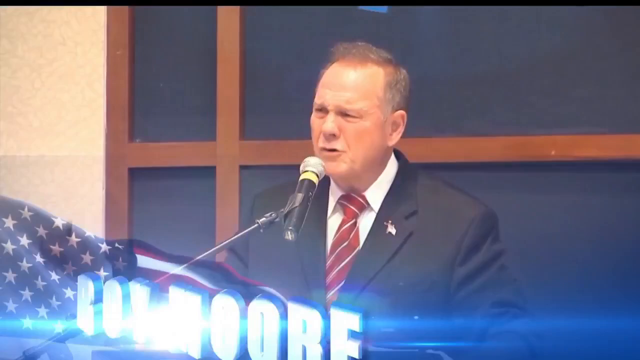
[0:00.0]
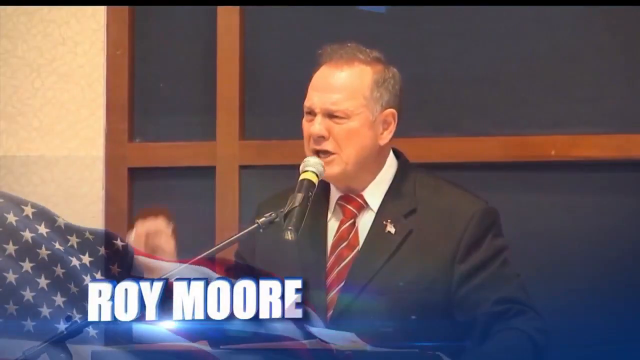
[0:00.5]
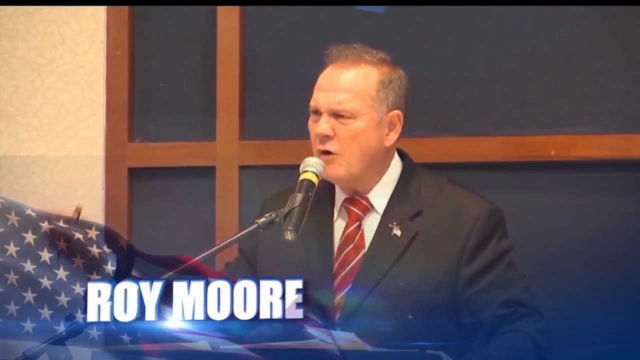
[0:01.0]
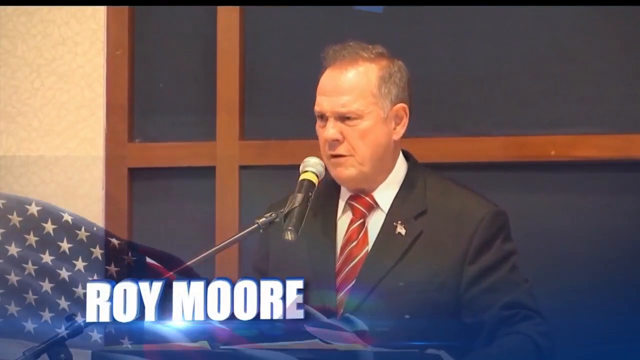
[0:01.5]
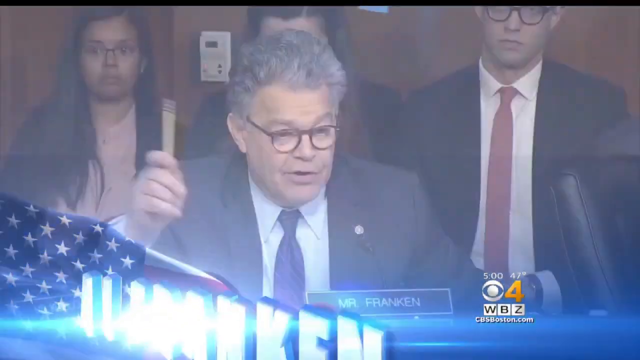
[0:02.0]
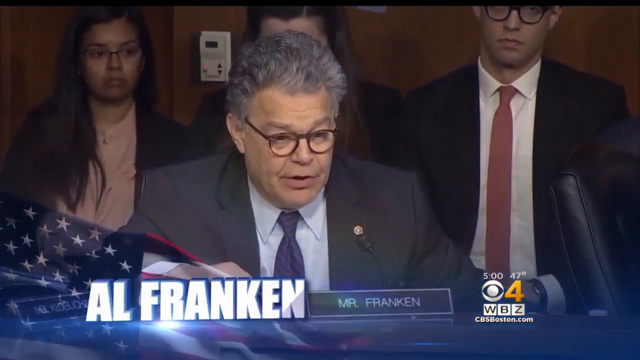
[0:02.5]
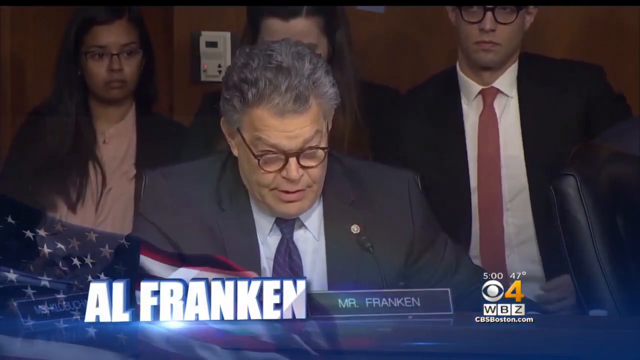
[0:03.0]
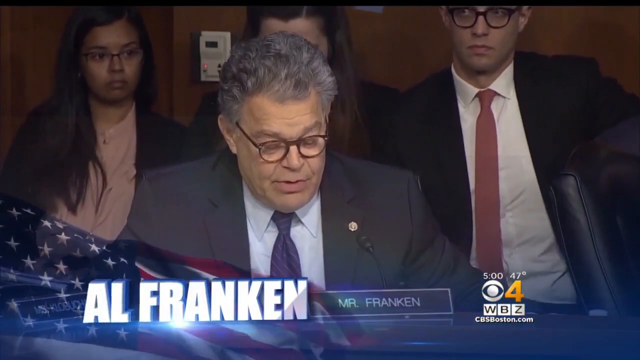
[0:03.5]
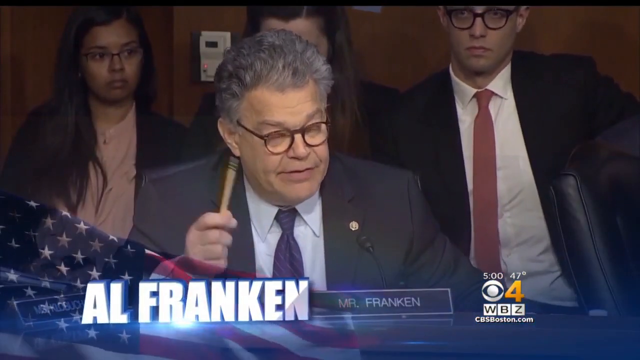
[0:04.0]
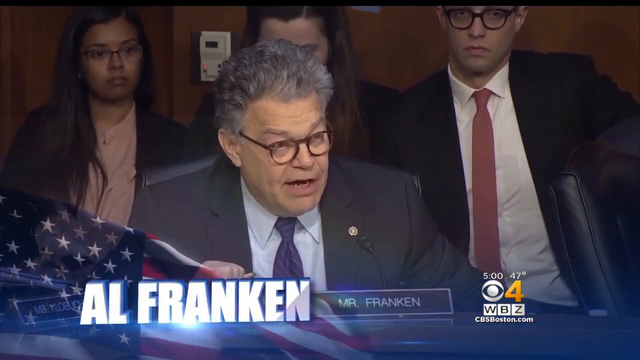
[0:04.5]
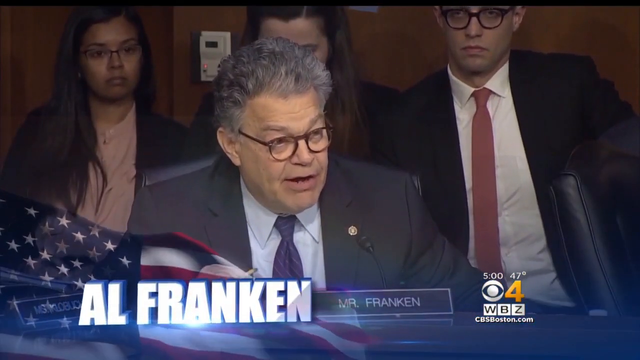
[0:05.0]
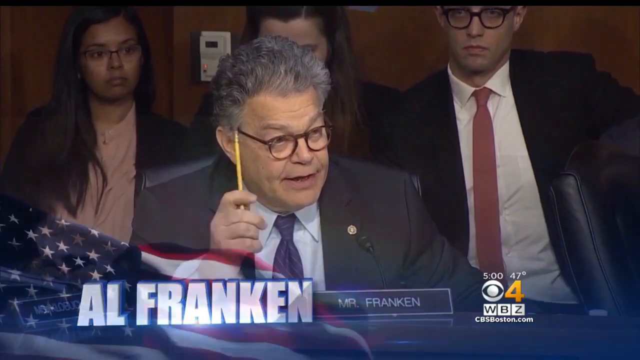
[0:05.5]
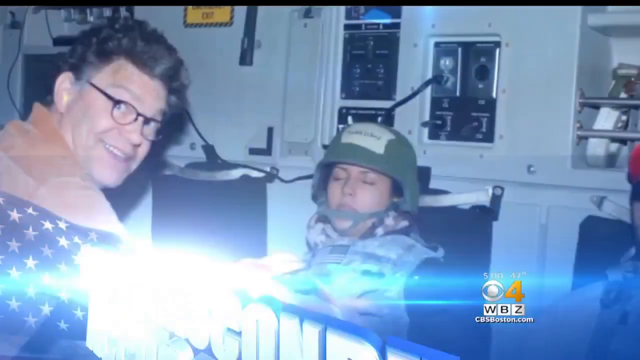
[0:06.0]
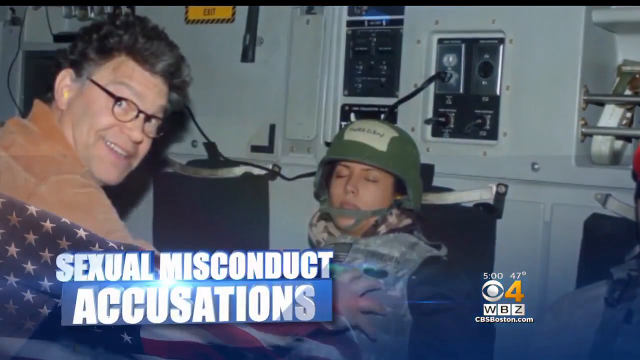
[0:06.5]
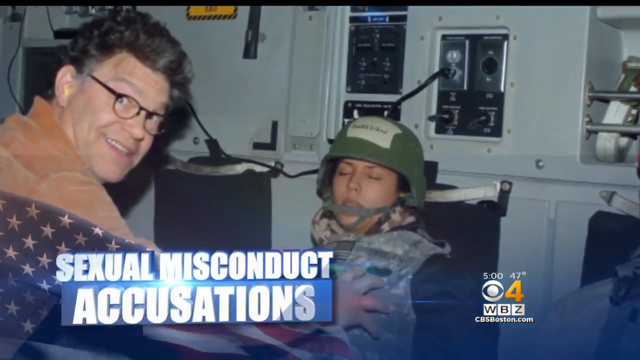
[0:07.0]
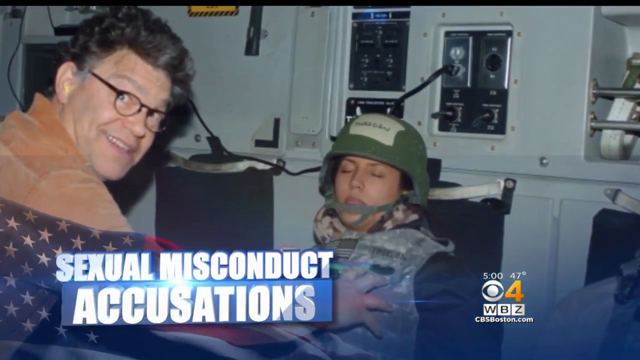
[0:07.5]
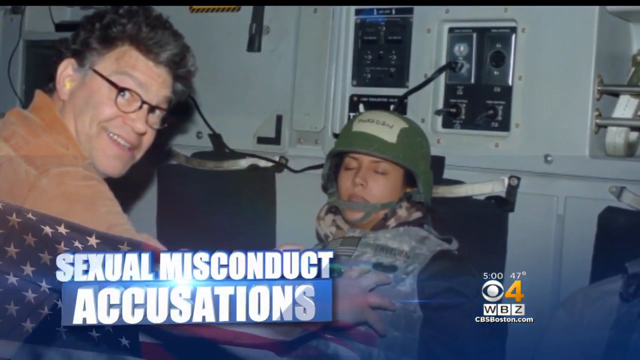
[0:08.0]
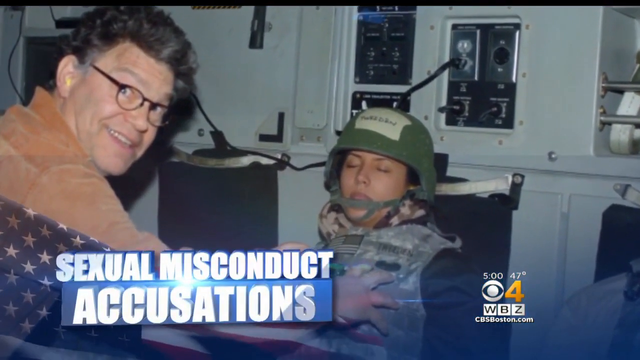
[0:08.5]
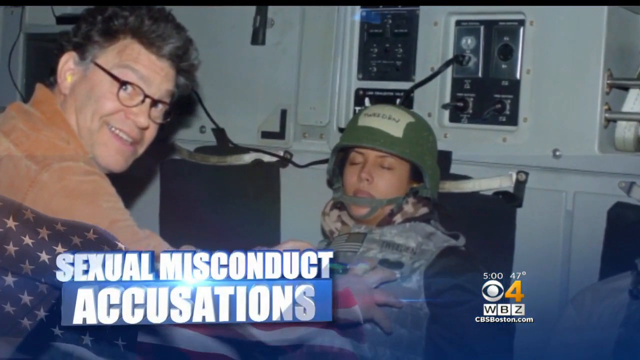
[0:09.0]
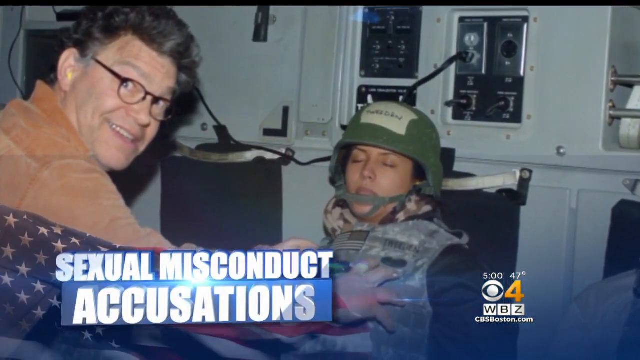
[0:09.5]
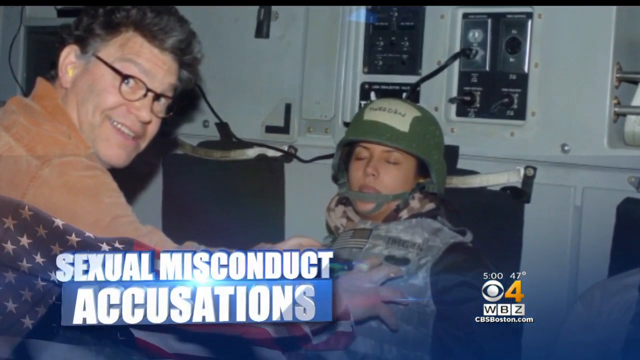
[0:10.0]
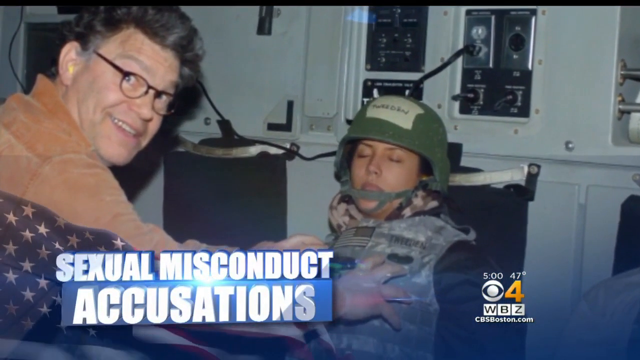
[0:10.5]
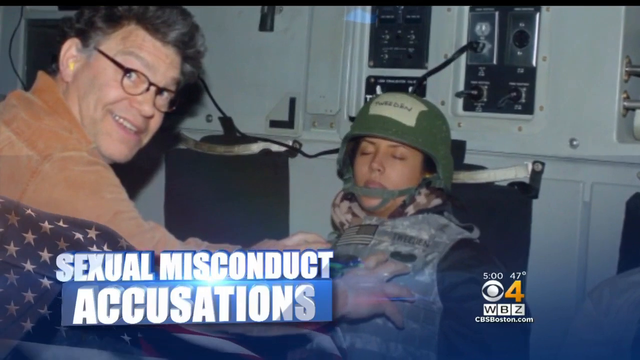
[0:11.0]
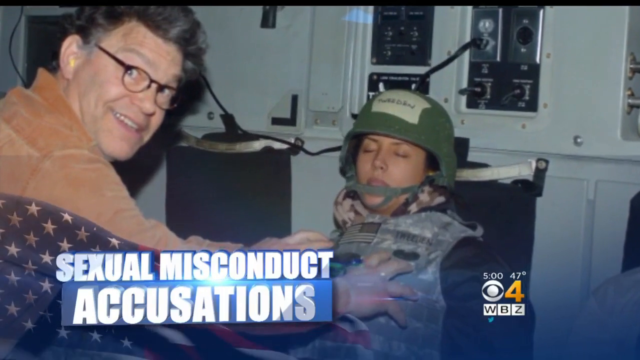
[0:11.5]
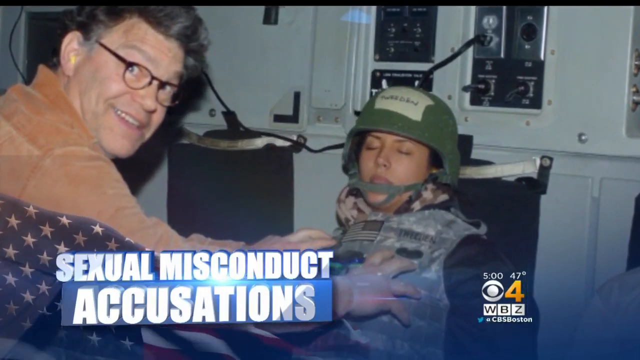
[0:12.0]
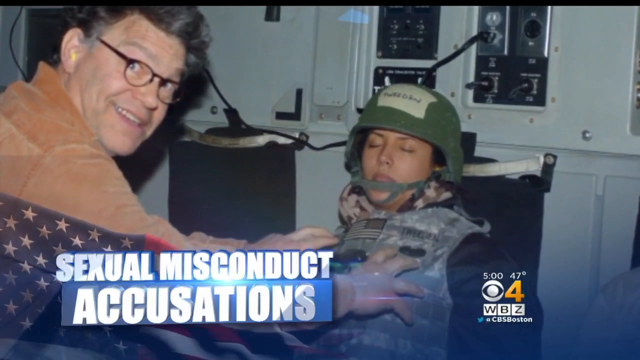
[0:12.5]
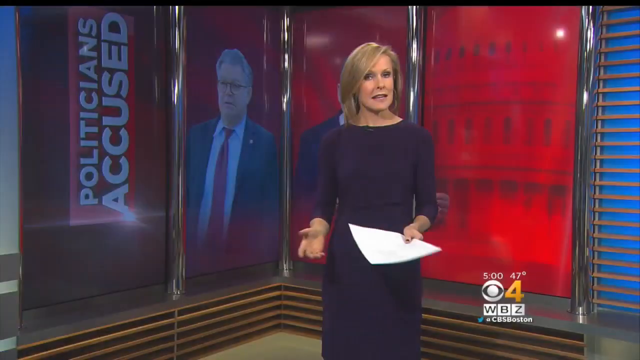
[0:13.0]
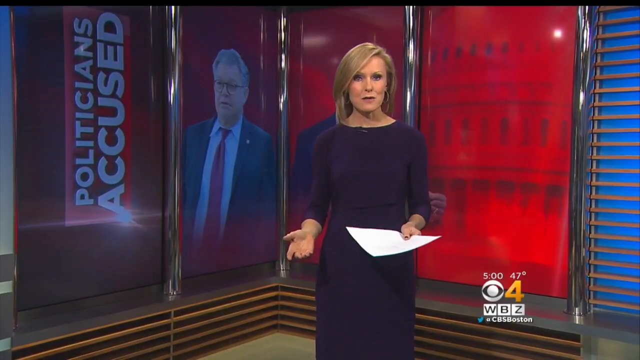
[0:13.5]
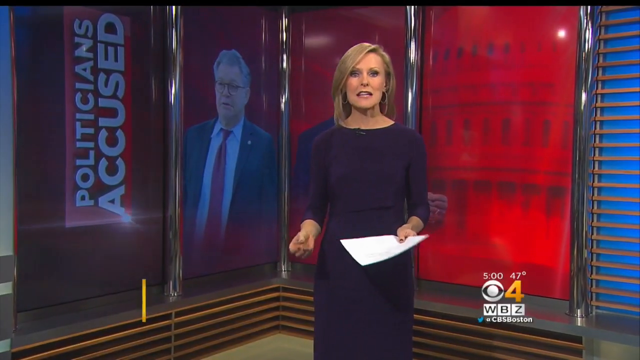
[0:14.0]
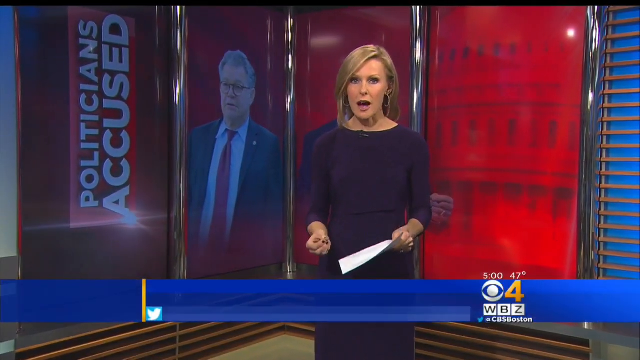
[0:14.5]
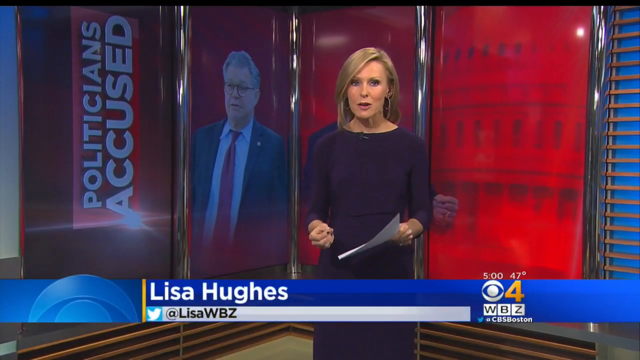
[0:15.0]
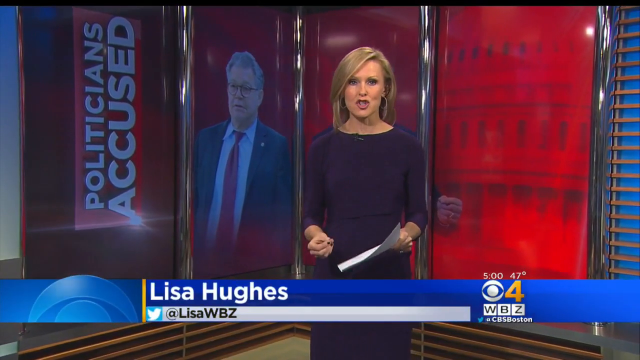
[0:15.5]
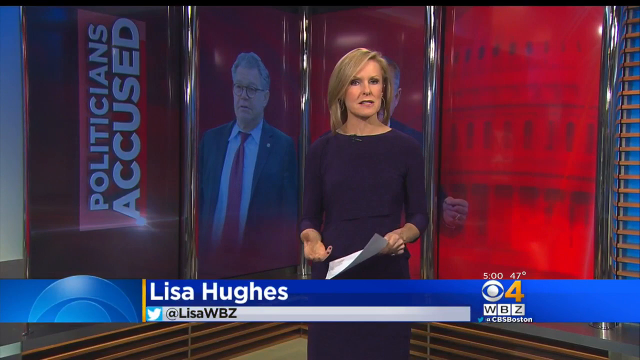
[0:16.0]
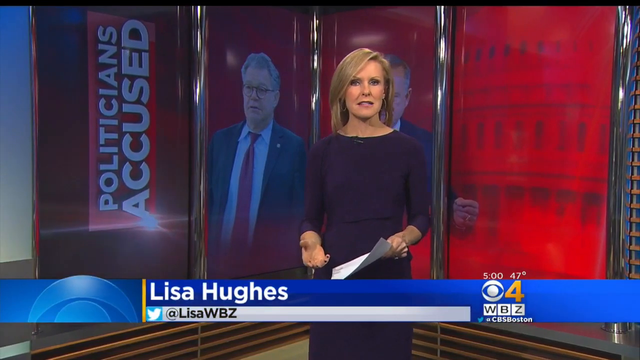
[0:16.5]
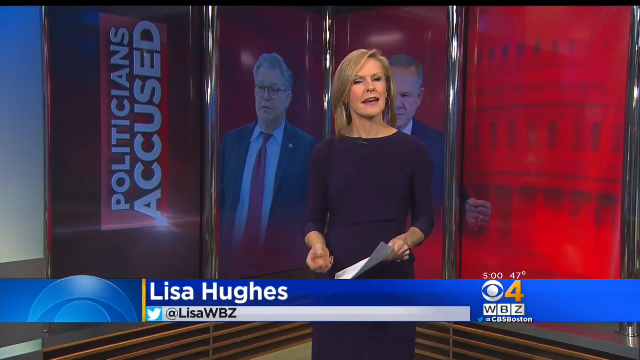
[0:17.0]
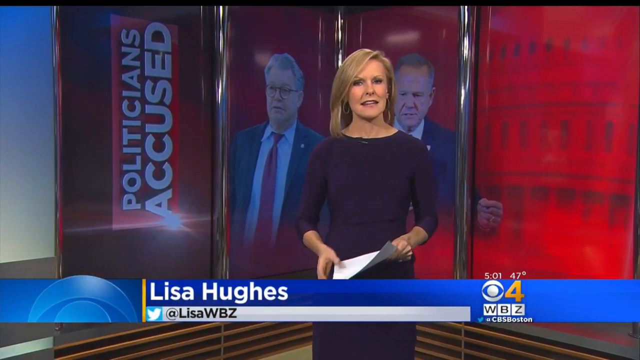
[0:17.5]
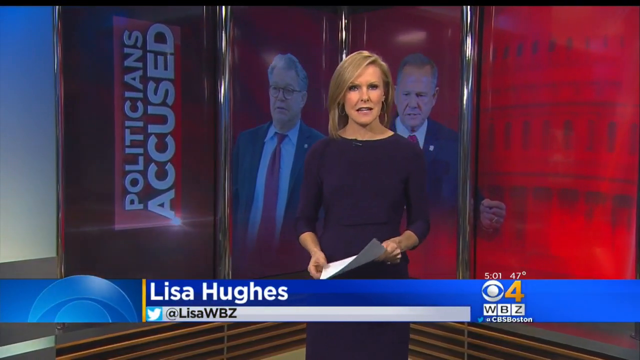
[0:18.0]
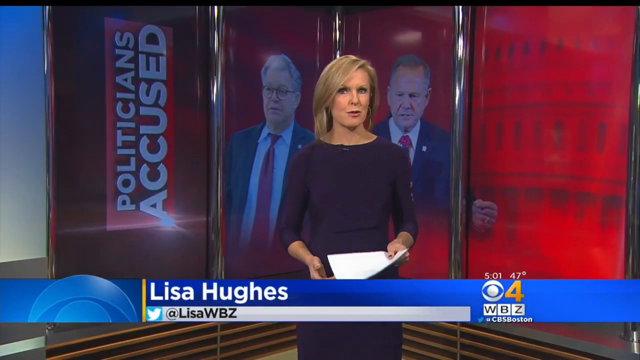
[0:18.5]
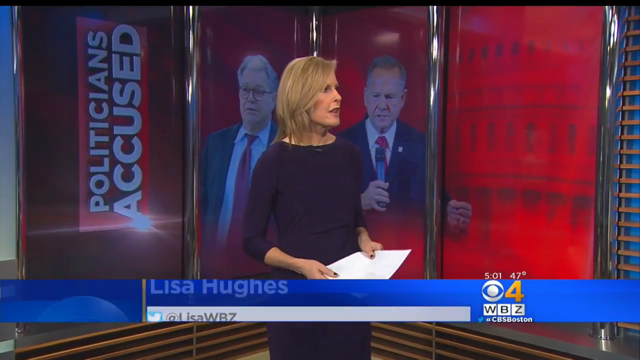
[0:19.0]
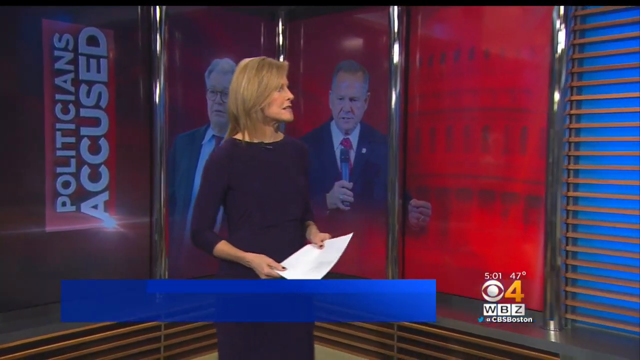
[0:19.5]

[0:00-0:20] A middle-aged white man with grey hair and a receding hairline speaks into a microphone, with a US flag, and his name appears: Roy Moore. Another old man with grey hair, wearing a suit, speaks next; behind him are three people, one man and two women. His name is Al Franken. Al Franken then appears in a photo, smiling while touching the breasts of a US woman military soldier over her uniform. Some technological devices are behind her, and a banner reads "sexual misconduct accusations". The video cuts to the Channel 4 WBZ TV studio, where a white woman in her 50s with medium-length blonde hair, wearing a purple dress, speaks to the camera. Behind her are the two men on a red background, and text on the left of the screen reads "politicians accused".